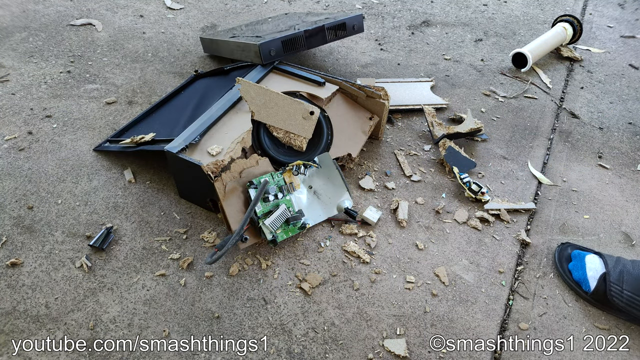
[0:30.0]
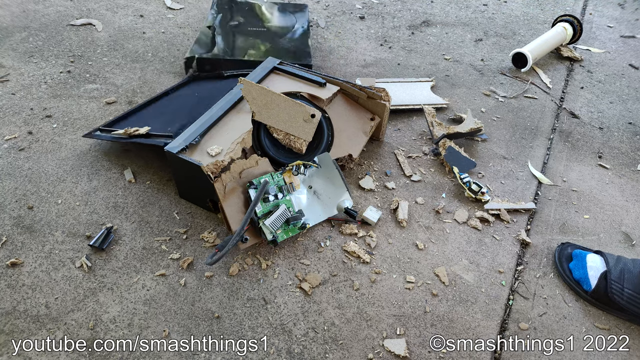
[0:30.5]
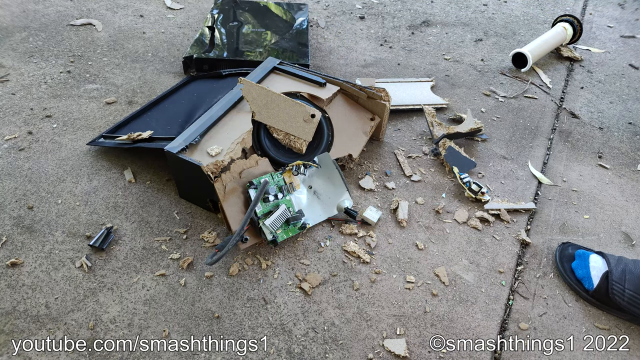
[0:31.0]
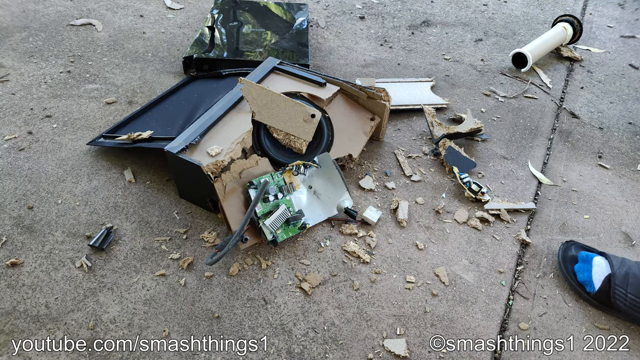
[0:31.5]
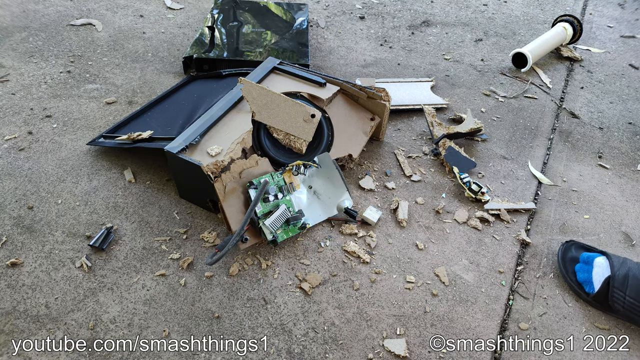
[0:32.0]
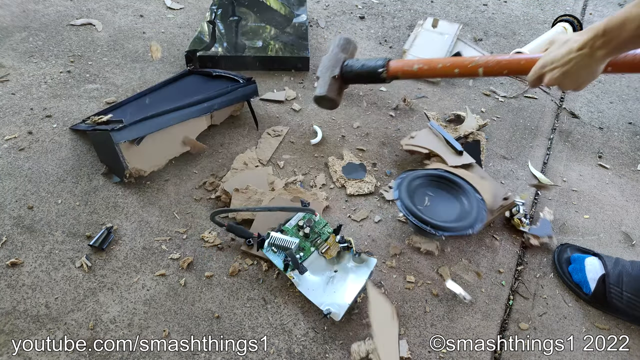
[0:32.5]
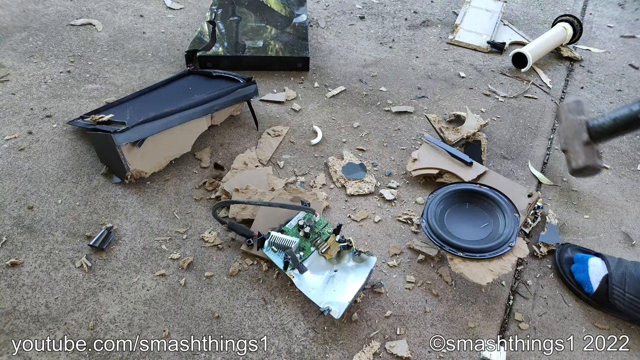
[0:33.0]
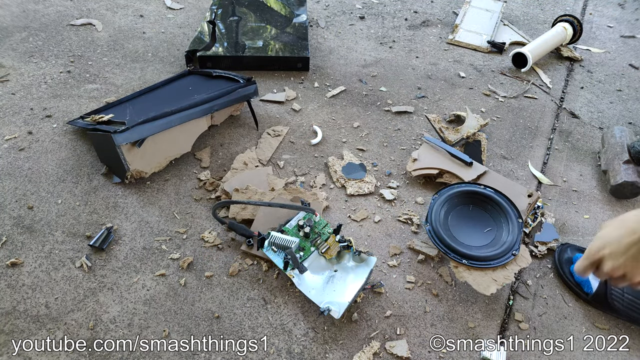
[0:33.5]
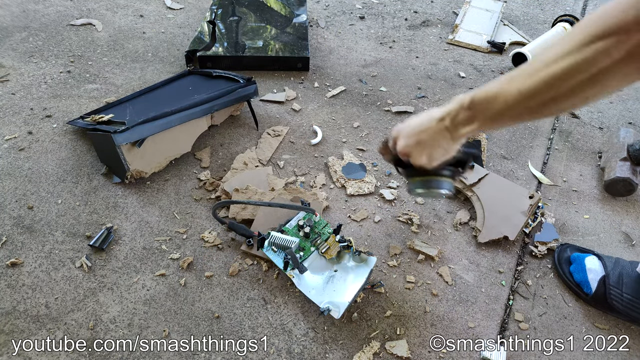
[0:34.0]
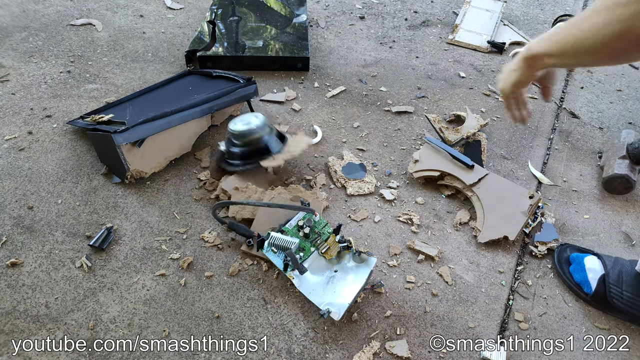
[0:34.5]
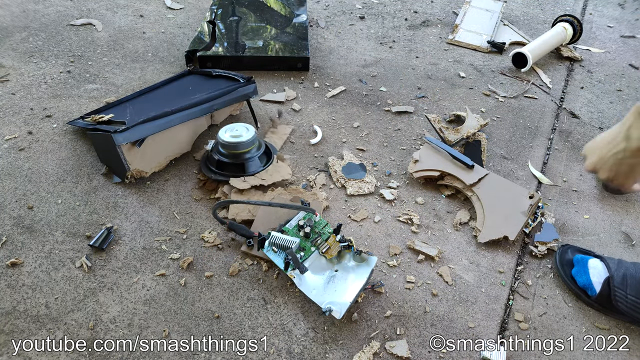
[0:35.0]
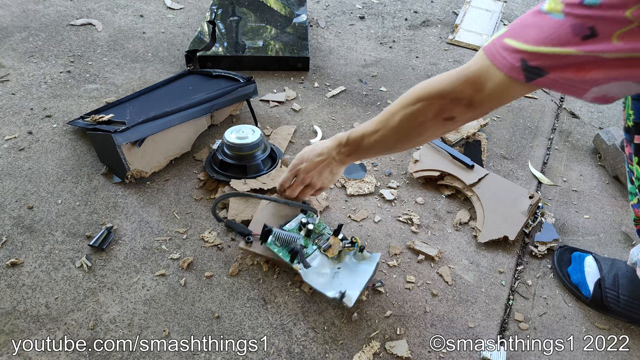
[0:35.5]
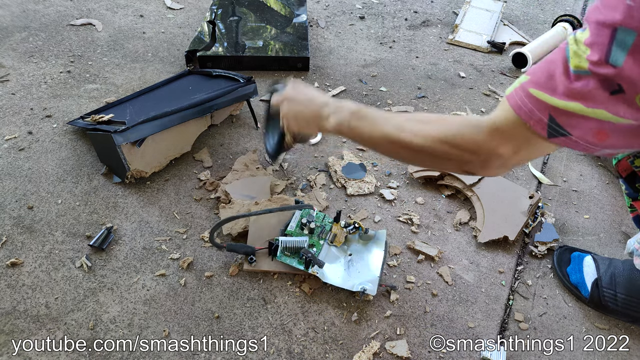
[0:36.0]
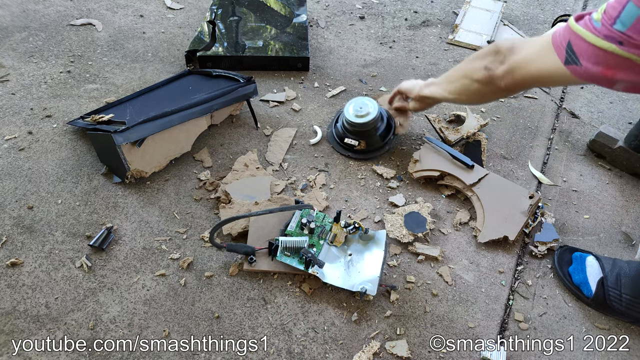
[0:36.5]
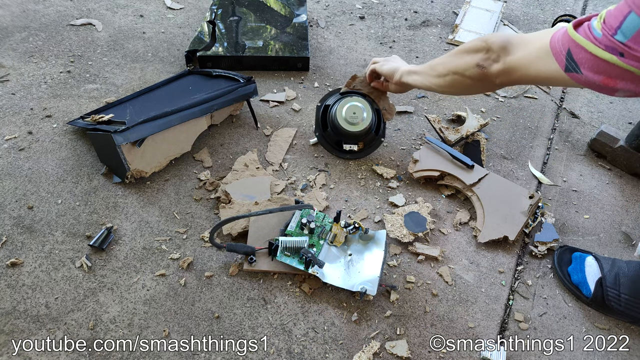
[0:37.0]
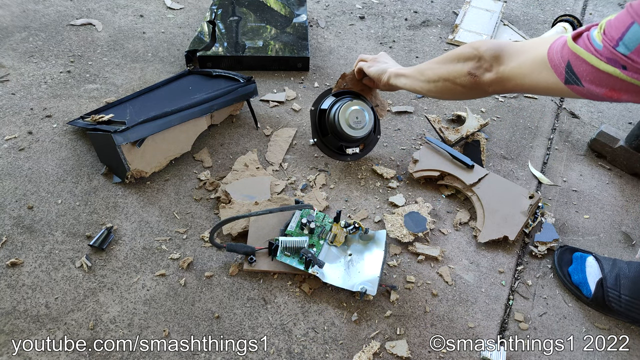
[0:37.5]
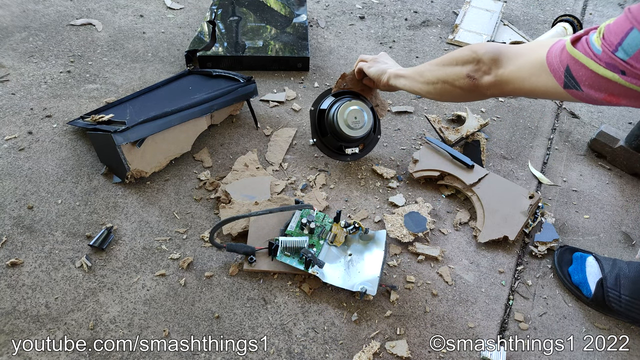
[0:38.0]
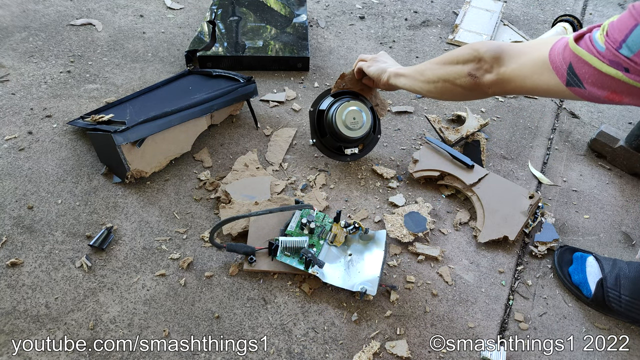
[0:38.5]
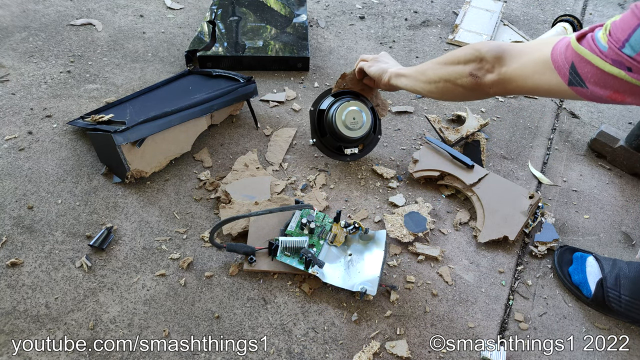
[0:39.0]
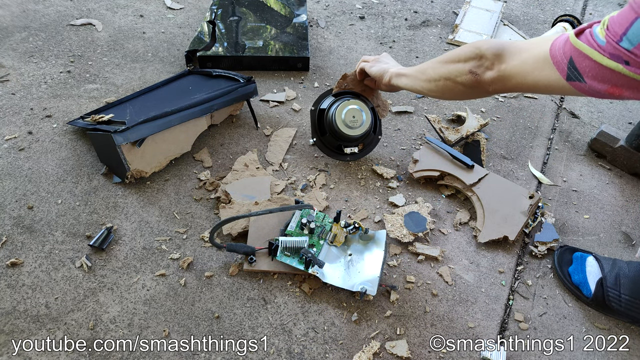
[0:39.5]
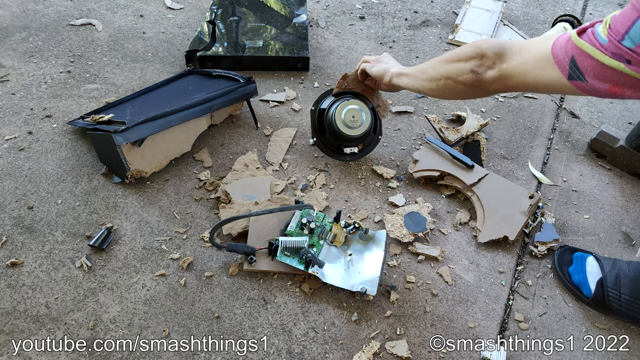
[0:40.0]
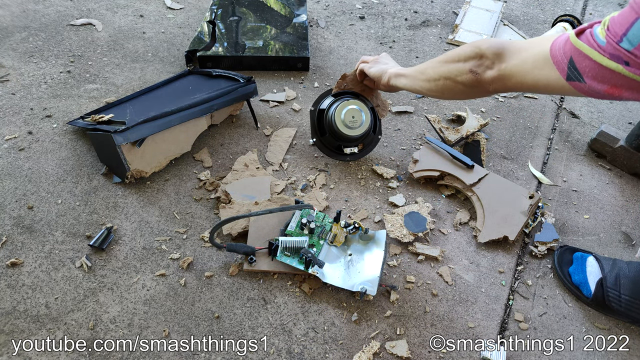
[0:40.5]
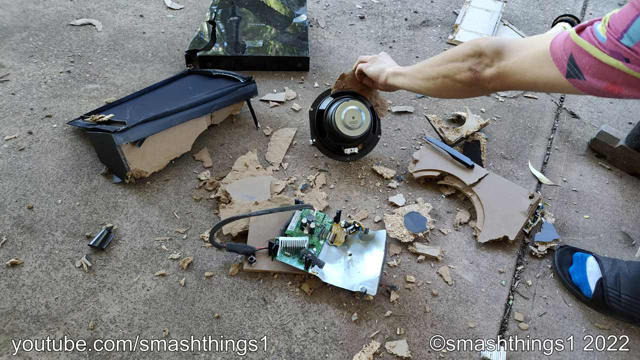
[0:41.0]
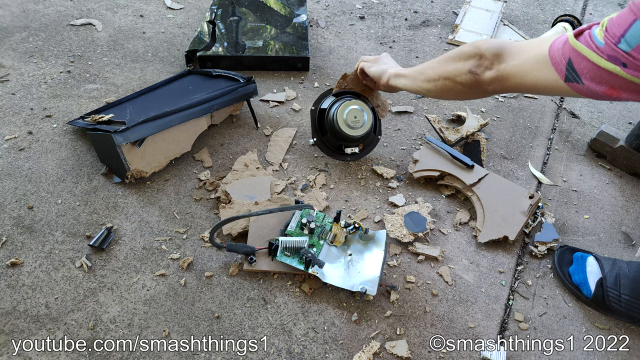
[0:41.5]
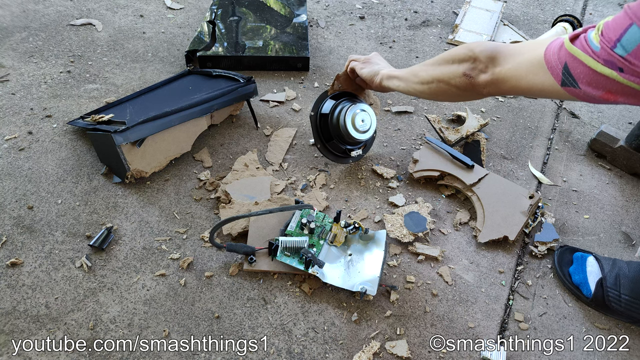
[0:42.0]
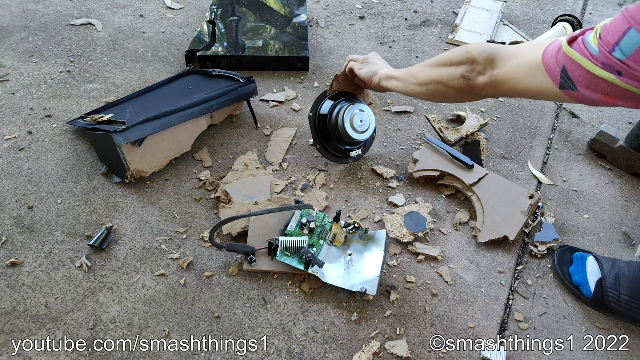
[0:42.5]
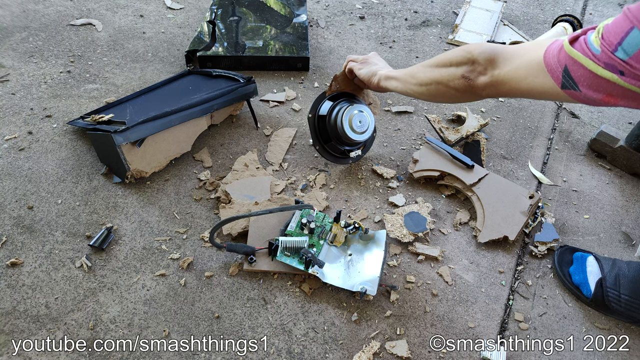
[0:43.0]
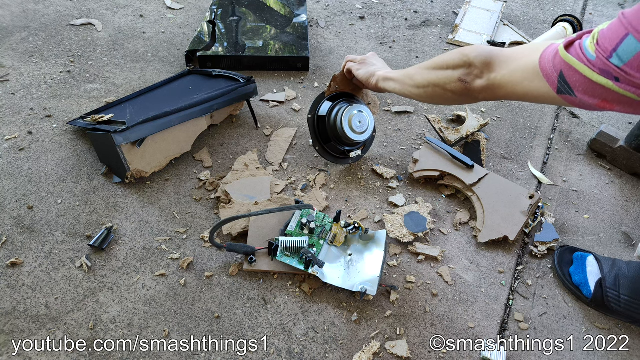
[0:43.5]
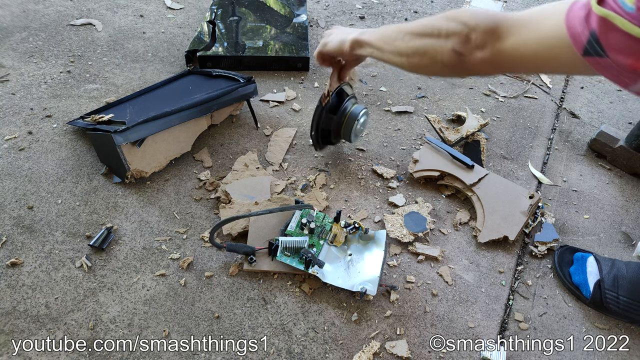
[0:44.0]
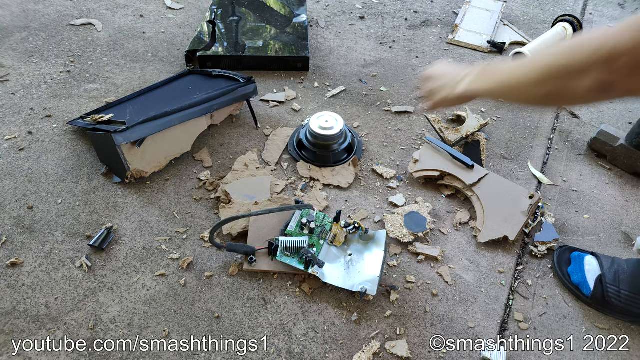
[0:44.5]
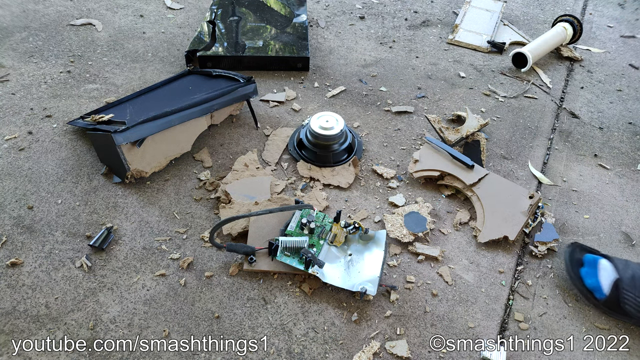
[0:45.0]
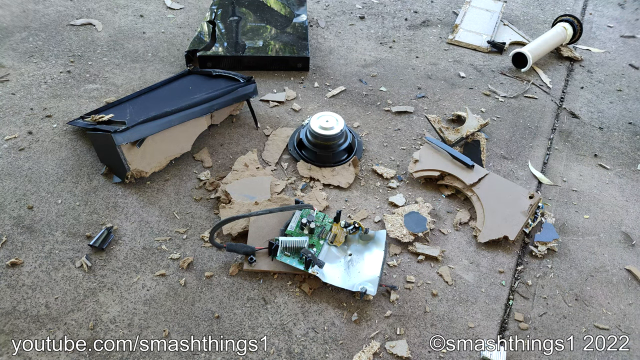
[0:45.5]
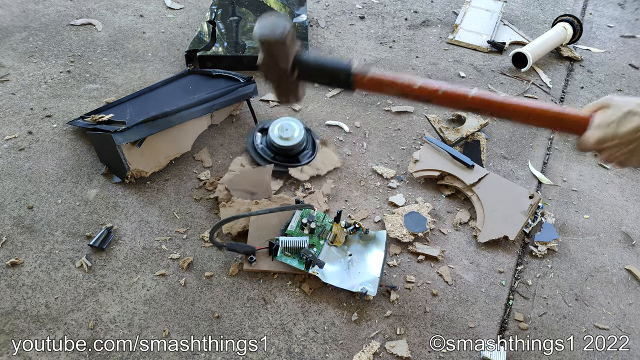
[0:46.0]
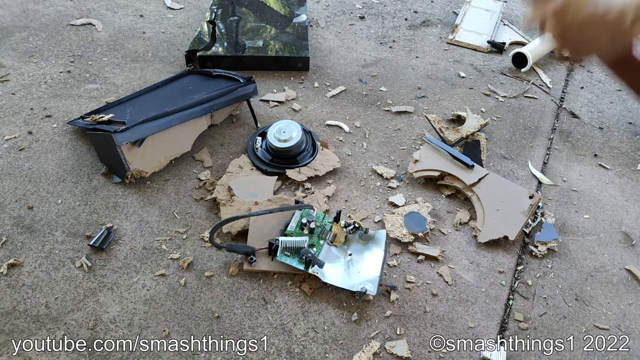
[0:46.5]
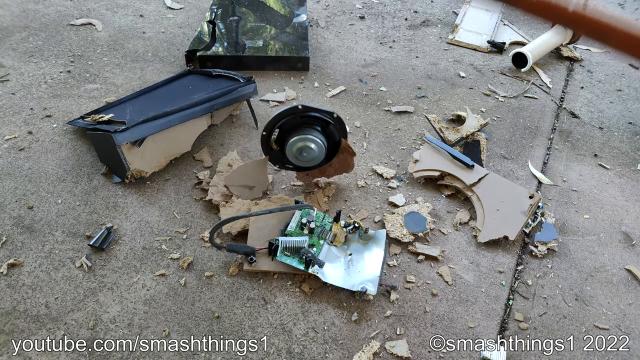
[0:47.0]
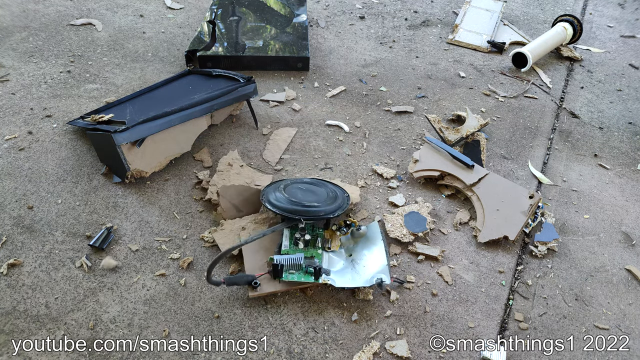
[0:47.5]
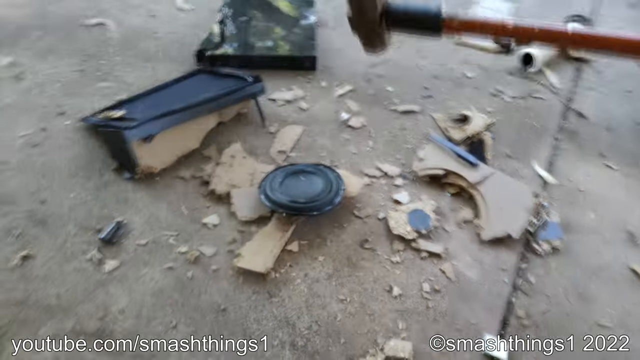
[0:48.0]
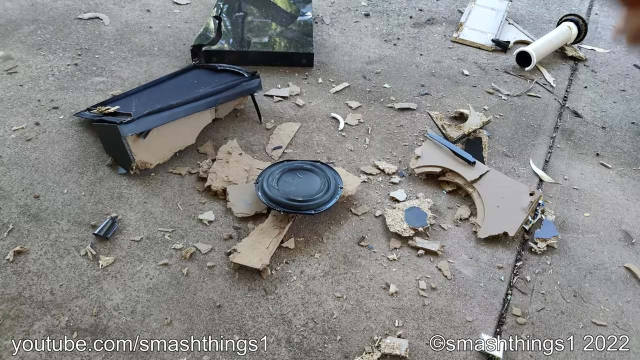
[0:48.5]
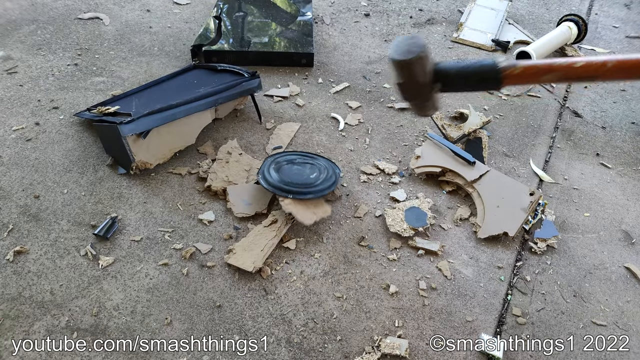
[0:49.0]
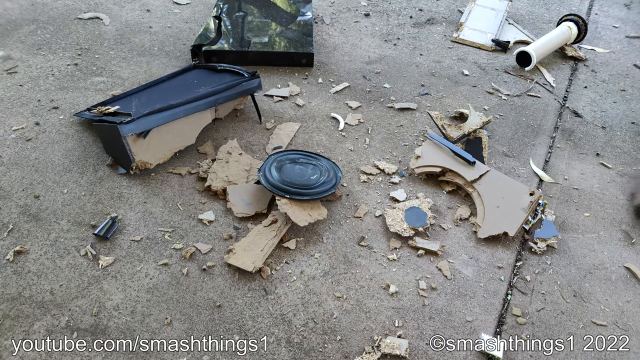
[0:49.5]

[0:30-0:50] Outside in the daytime, a man is breaking apart a speaker that is inside a wooden and metal box. He keeps hitting everything over and over with a quite large sledgehammer, busting the item into several different pieces. He takes the speaker part, turns it around, lays it back down on the ground, and hits it again with the sledgehammer to flatten it some more. Several leaves, busted-up pieces of particle board, and screws are on the ground. Part of his hand is visible, and he wears a colorful short-sleeved shirt. Part of his foot is visible too: he has on a pair of black slides and a blue and white sock.